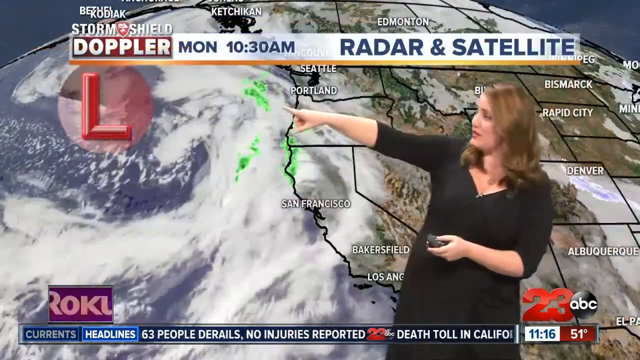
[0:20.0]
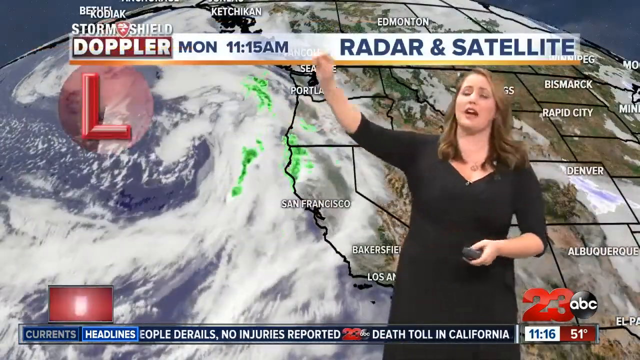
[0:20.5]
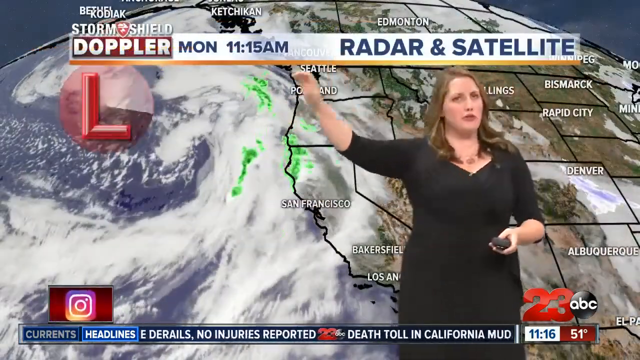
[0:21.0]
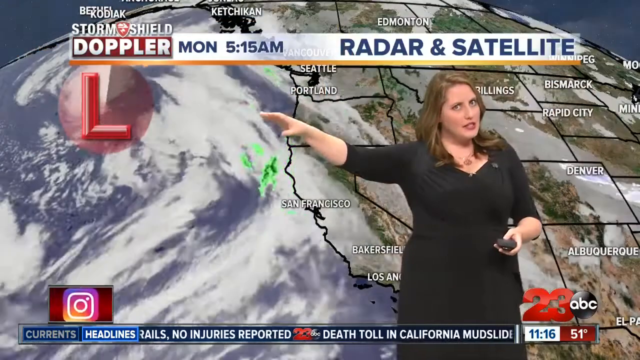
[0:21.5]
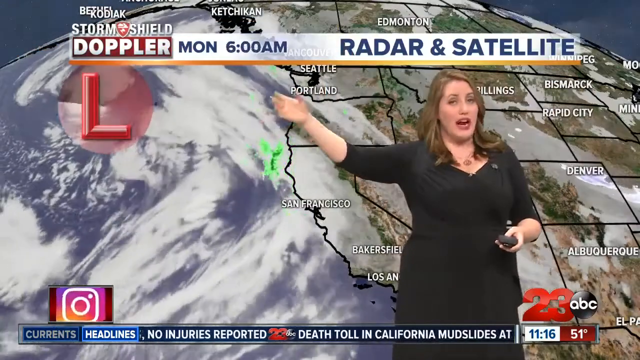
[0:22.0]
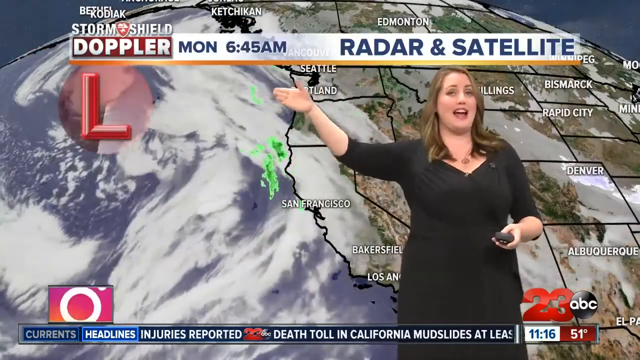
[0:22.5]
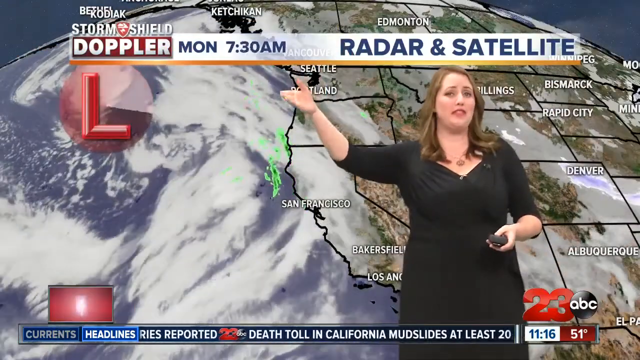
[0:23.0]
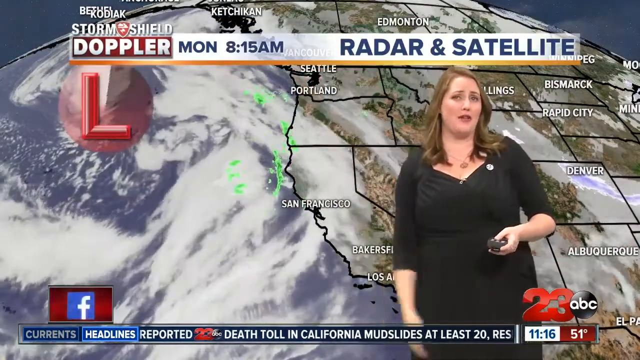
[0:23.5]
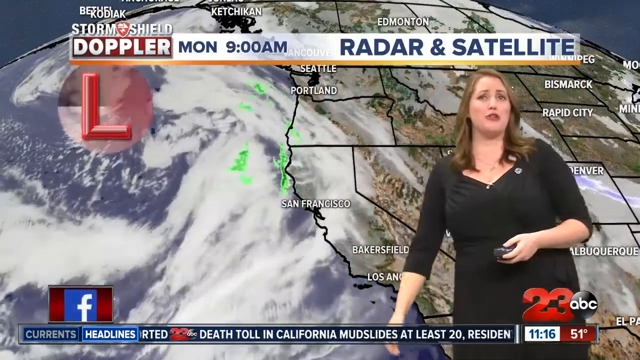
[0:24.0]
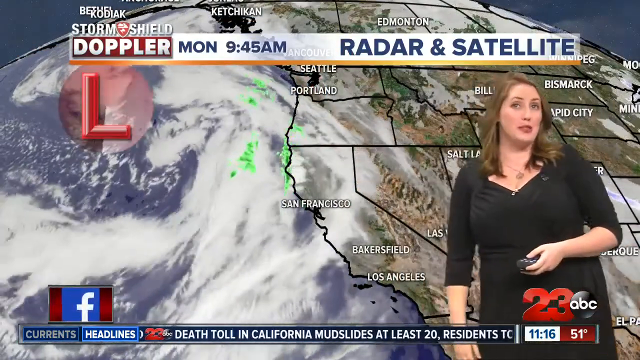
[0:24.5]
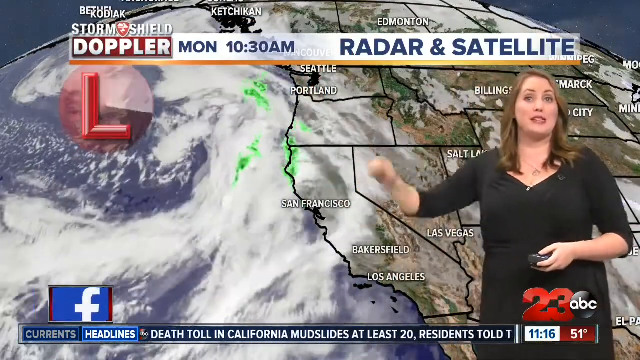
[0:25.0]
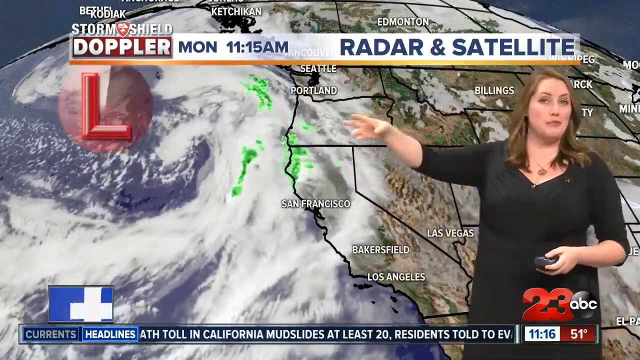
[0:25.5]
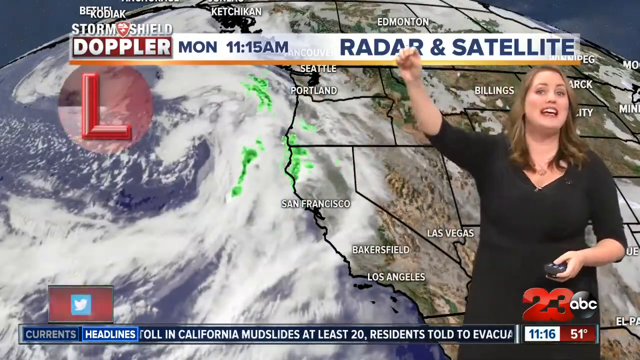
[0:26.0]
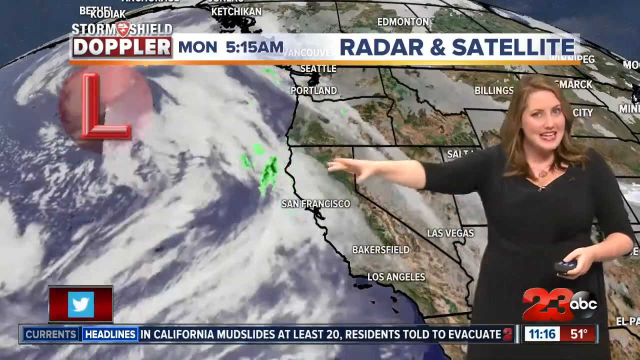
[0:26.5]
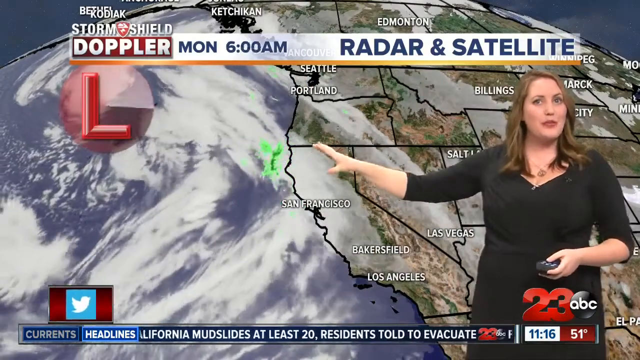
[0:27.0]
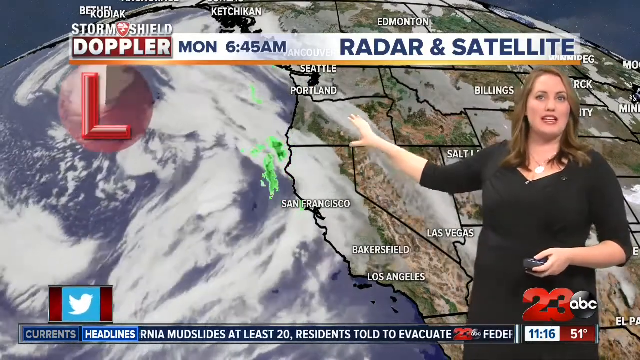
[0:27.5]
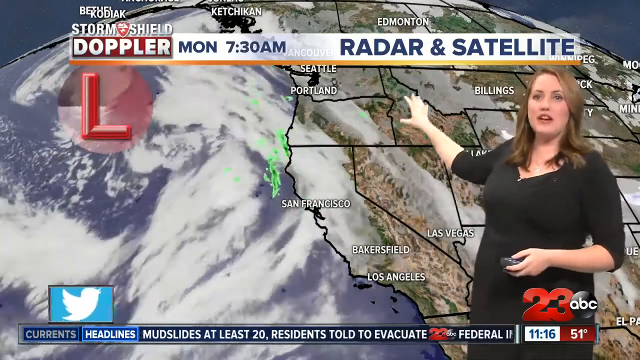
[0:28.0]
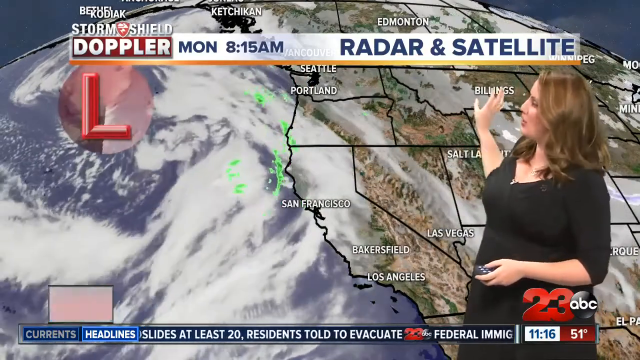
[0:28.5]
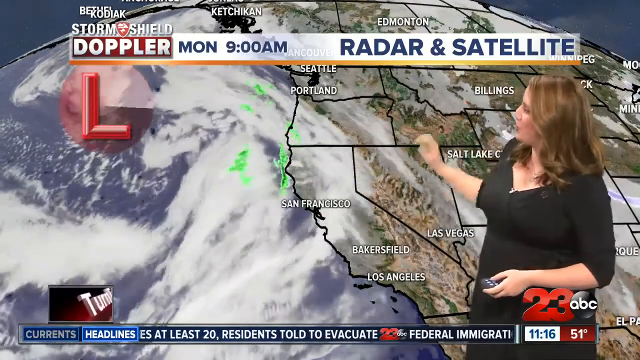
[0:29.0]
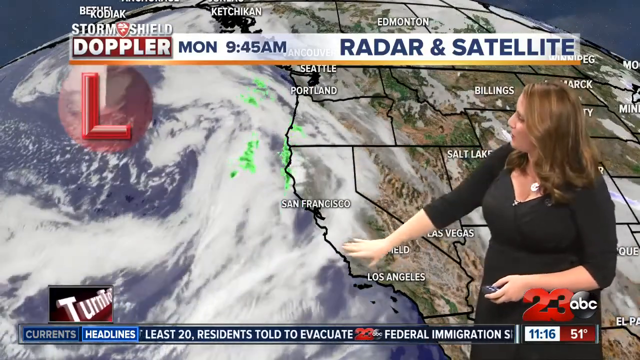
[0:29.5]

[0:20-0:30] The ABC News Channel 23 Storm Shield severe weather alert covers Yosemite and Bakersfield. A map of the western part of the United States appears, and the meteorologist points to a weather system coming in to the west coast, marked with a gigantic red L, presumably low pressure. She holds her remote in her left hand and uses her hands to indicate where the storm is going. In the corner on the left-hand side the word "Roku" appears. The map behind her looks like a gigantic globe.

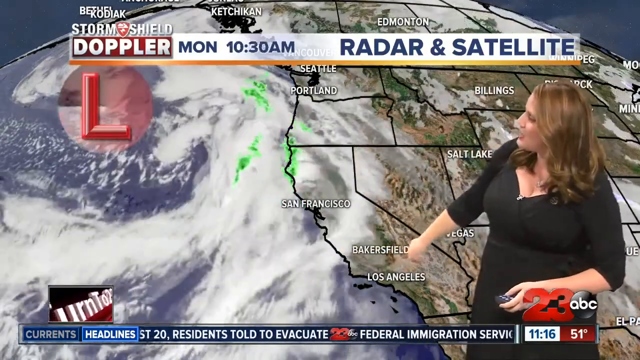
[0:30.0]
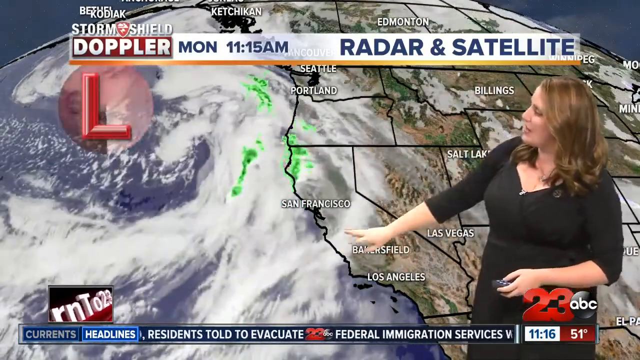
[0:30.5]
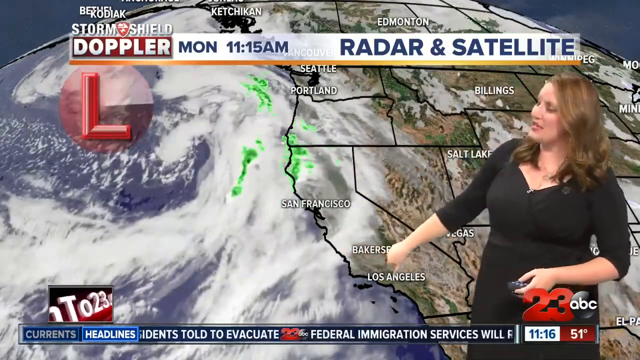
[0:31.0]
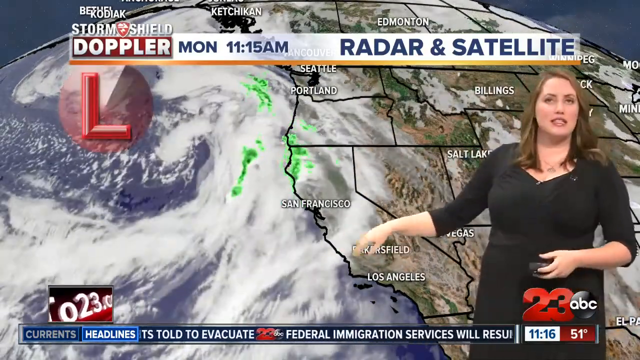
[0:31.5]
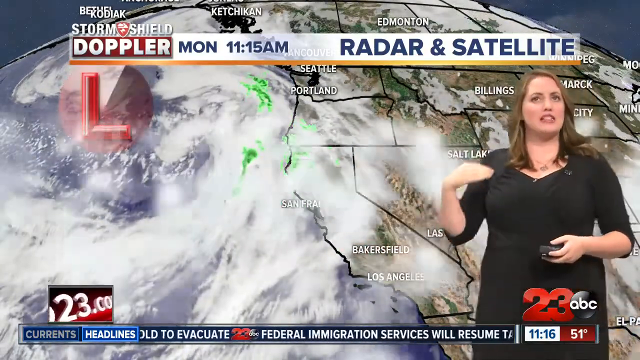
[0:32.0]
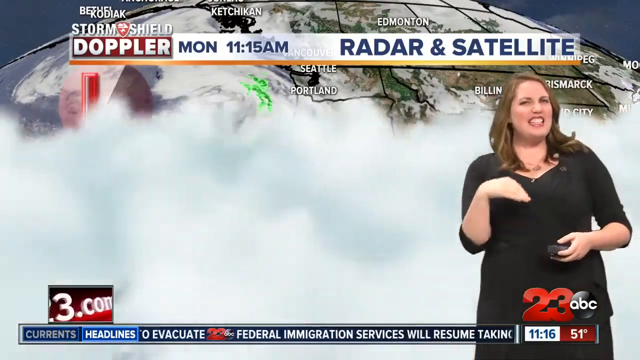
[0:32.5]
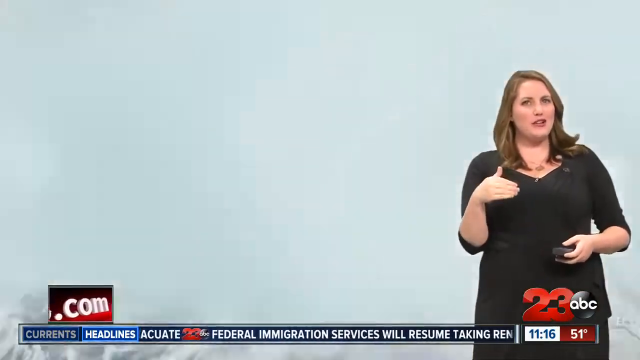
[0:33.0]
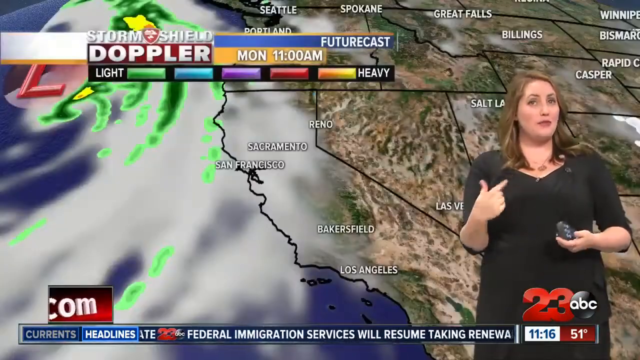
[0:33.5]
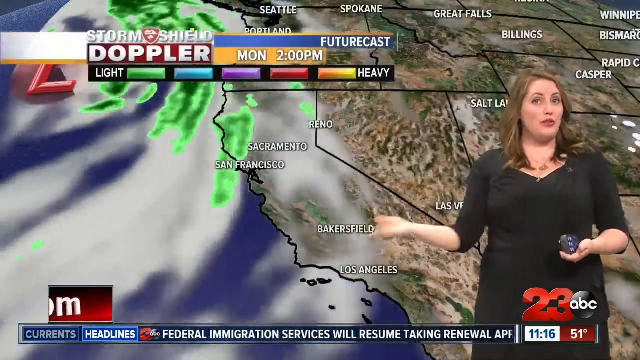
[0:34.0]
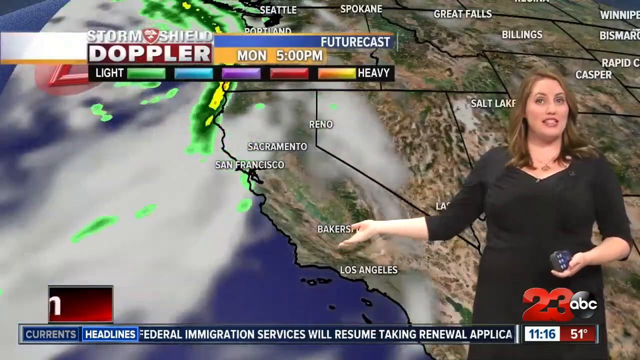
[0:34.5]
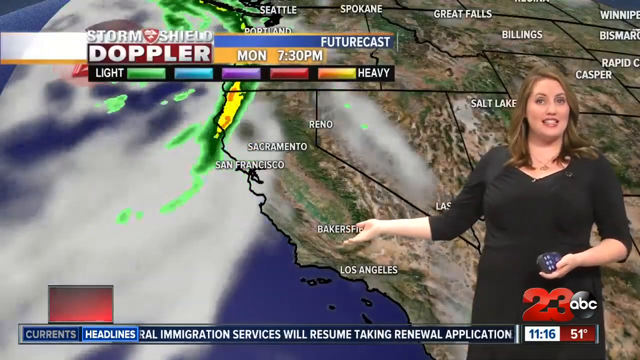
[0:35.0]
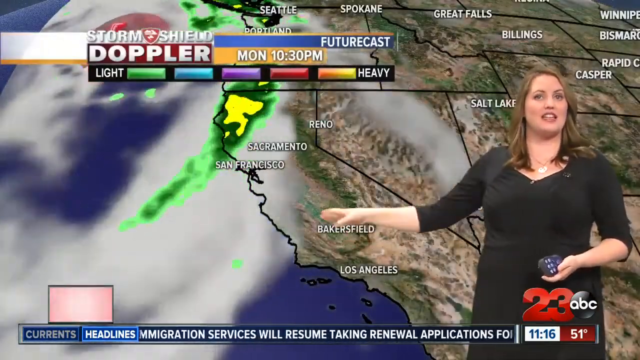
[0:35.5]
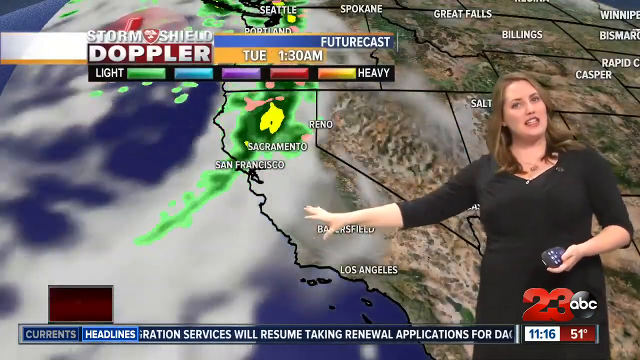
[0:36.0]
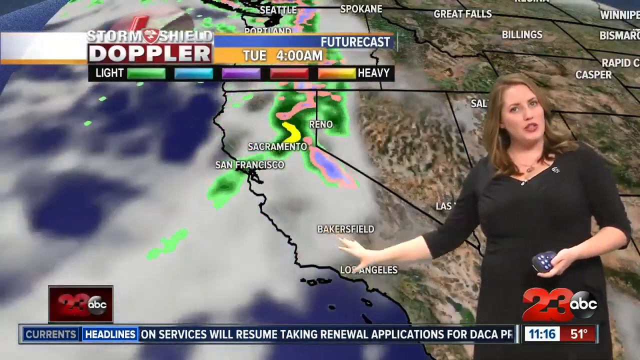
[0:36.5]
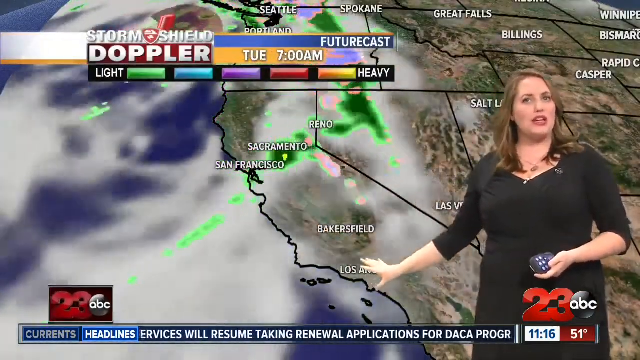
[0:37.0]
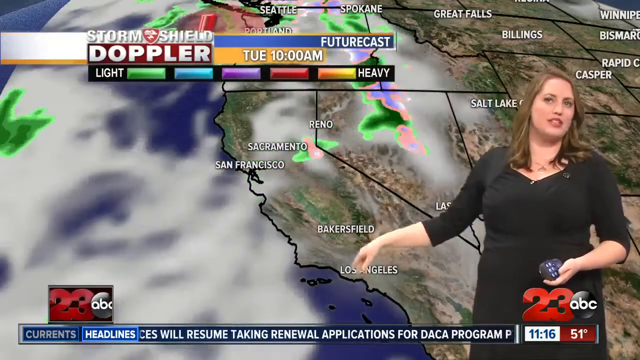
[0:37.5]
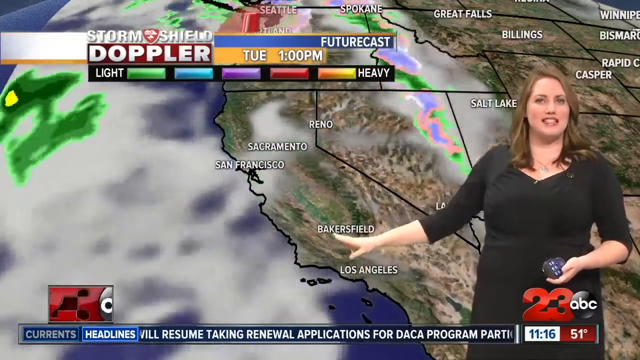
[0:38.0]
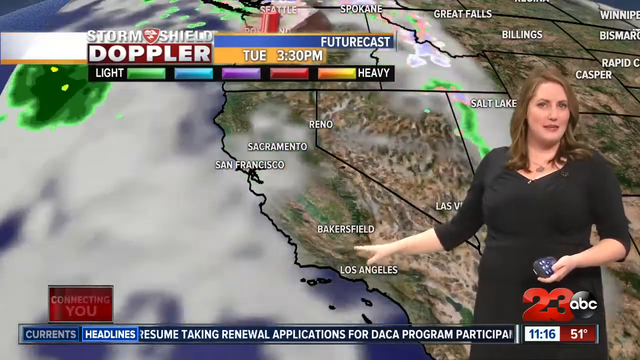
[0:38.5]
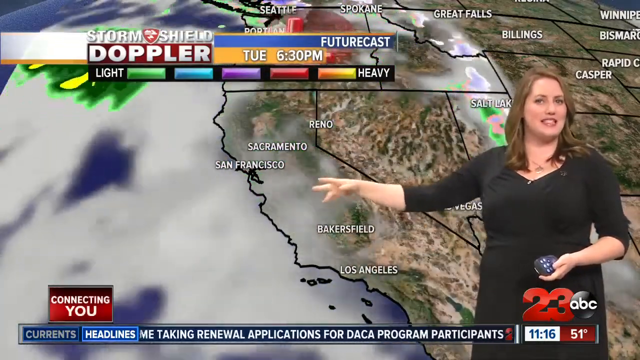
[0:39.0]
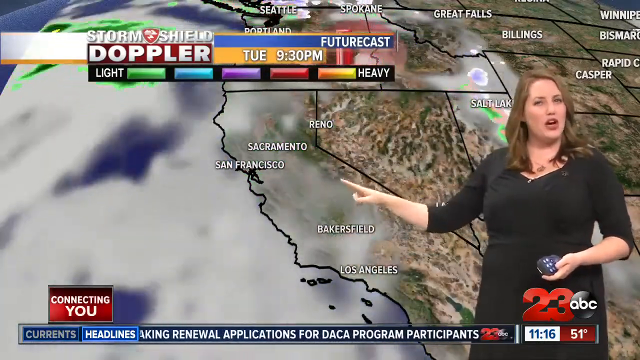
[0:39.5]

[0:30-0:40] The News Channel 23 Storm Shield Severe Weather Alert for Yosemite National Park and Bakersfield is zoomed out, showing the western United States along the coast. The meteorologist is a somewhat bigger woman wearing a black dress with a v-neck neckline and red lipstick, her somewhat golden-brown hair parted on her right side. She shows clouds coming in, with the Doppler using different colors from light to heavy. A future cast for Tuesday at 9 shows colors coming across the western part of the United States.